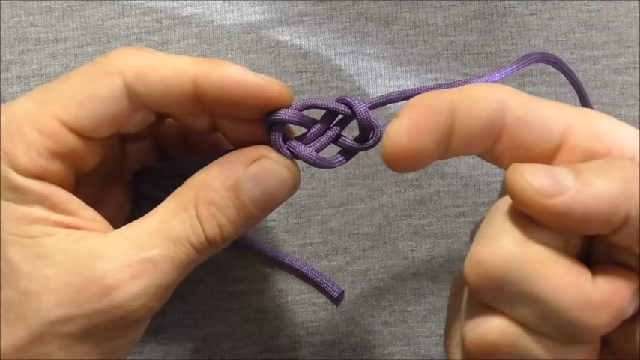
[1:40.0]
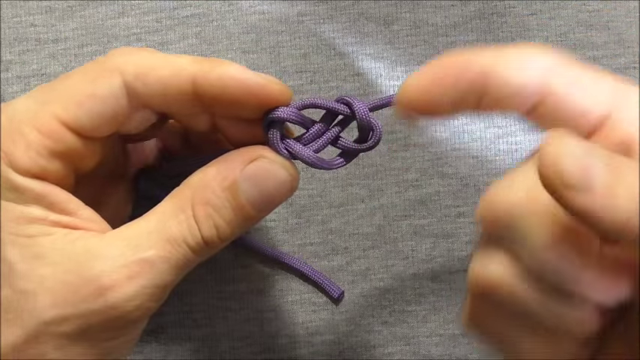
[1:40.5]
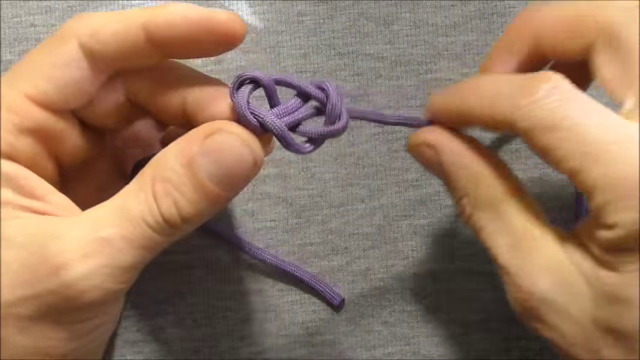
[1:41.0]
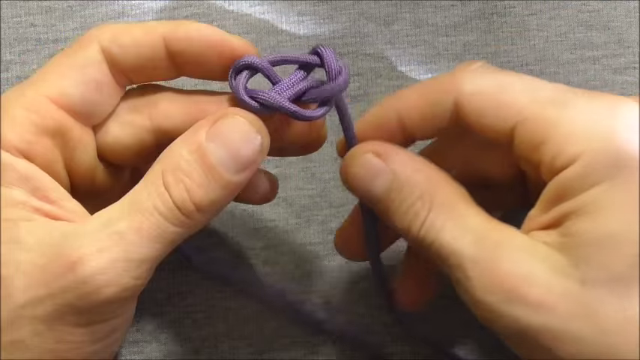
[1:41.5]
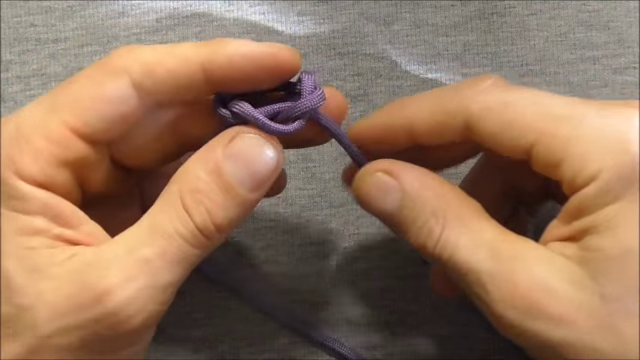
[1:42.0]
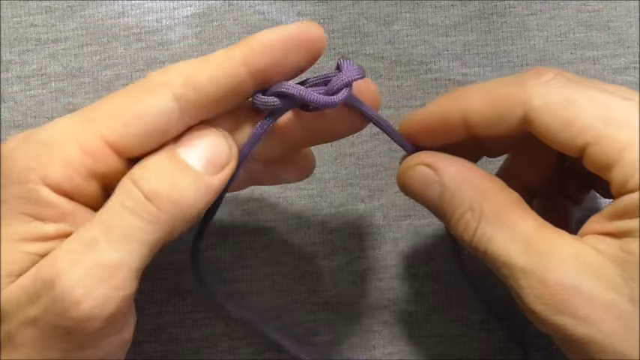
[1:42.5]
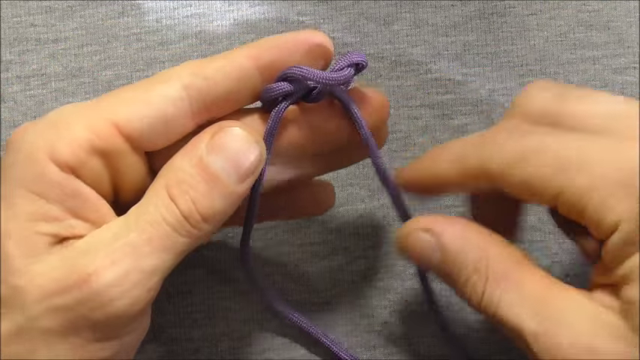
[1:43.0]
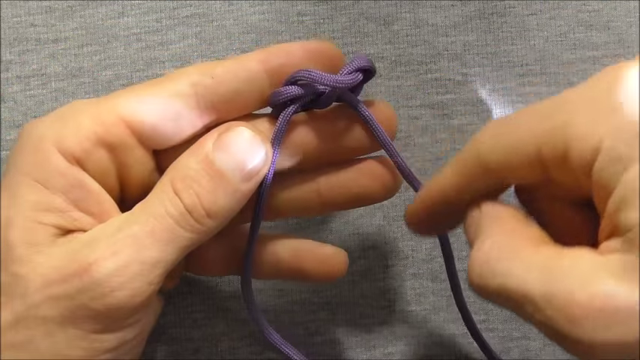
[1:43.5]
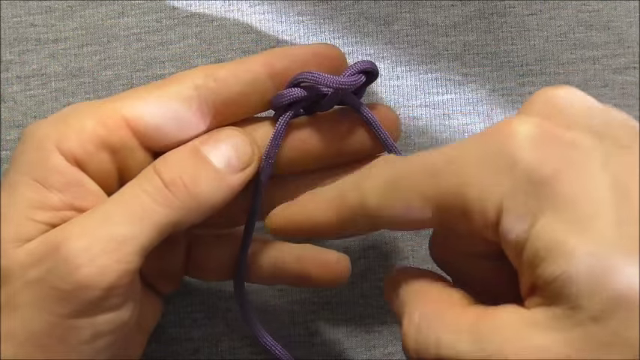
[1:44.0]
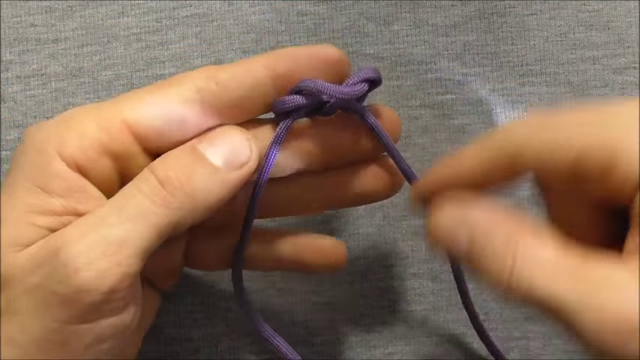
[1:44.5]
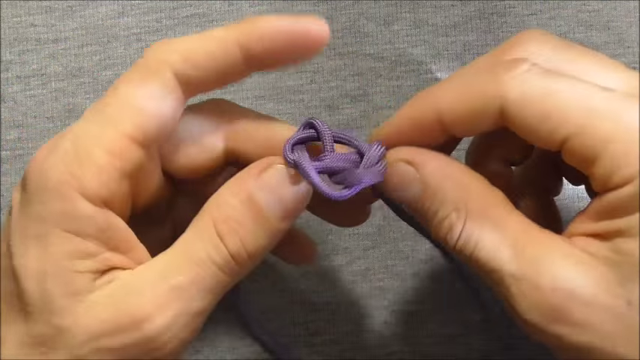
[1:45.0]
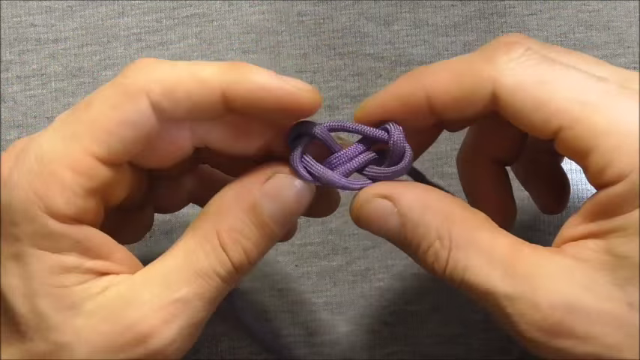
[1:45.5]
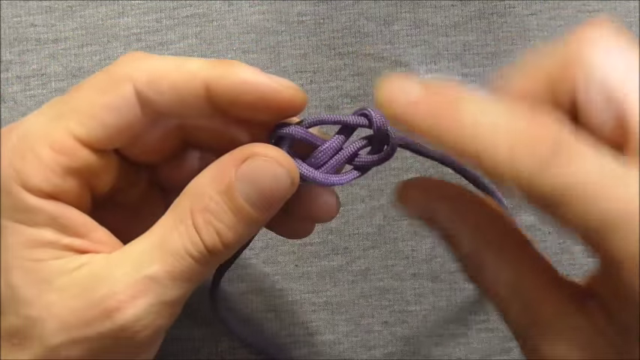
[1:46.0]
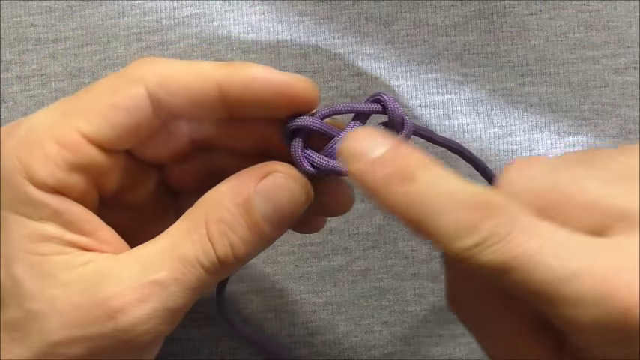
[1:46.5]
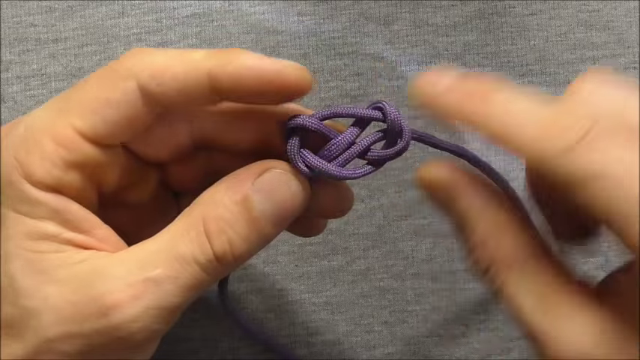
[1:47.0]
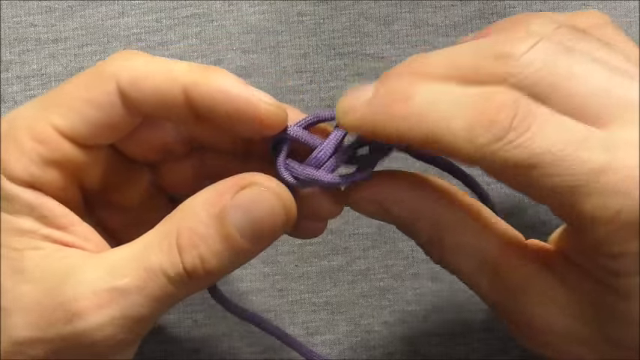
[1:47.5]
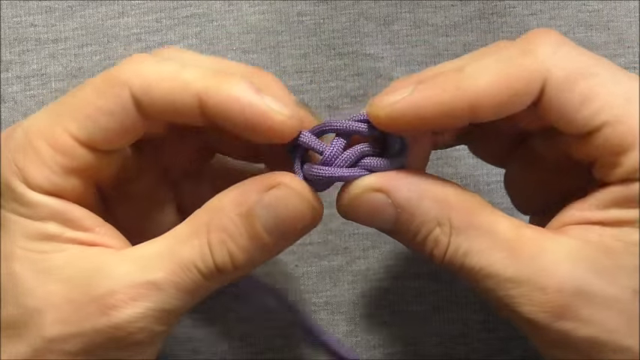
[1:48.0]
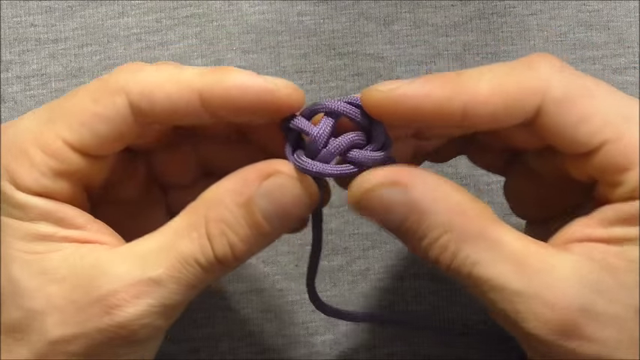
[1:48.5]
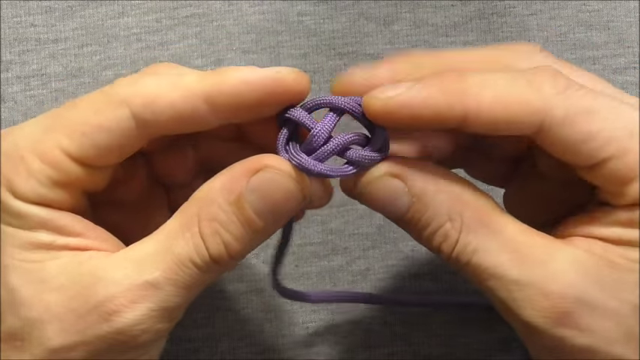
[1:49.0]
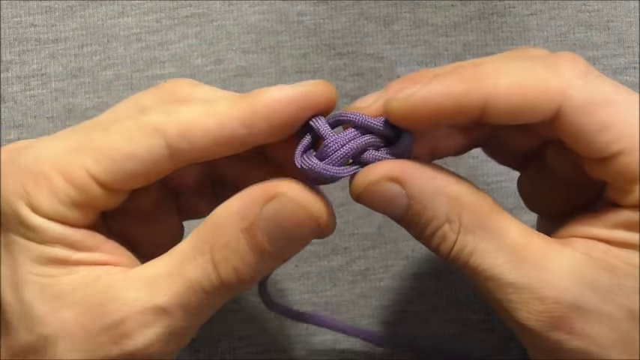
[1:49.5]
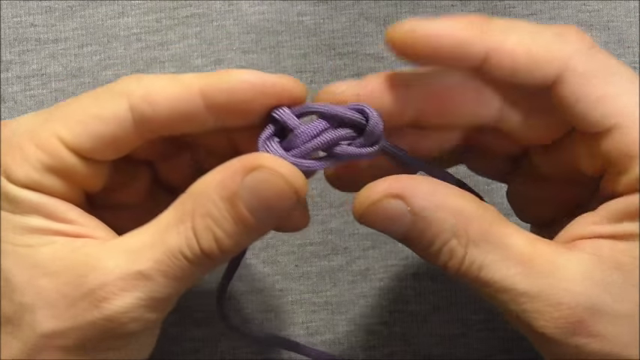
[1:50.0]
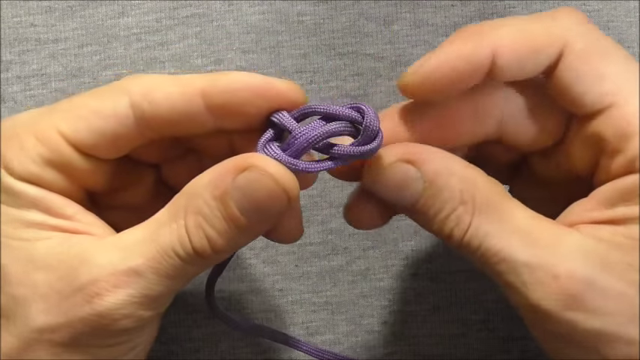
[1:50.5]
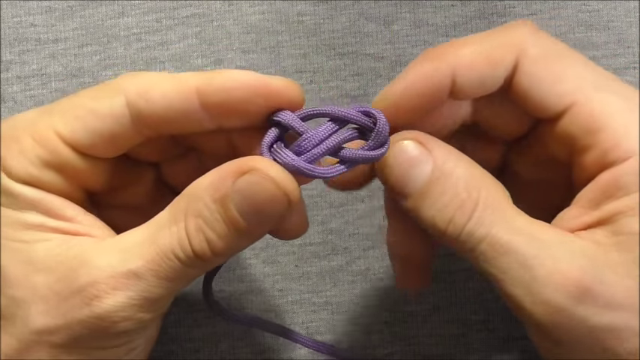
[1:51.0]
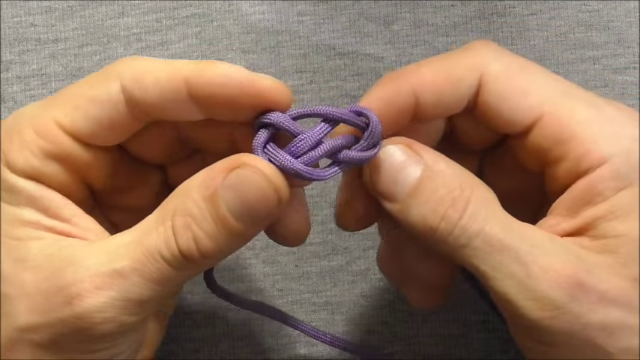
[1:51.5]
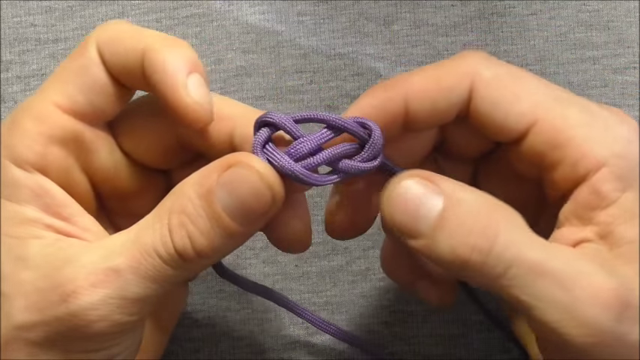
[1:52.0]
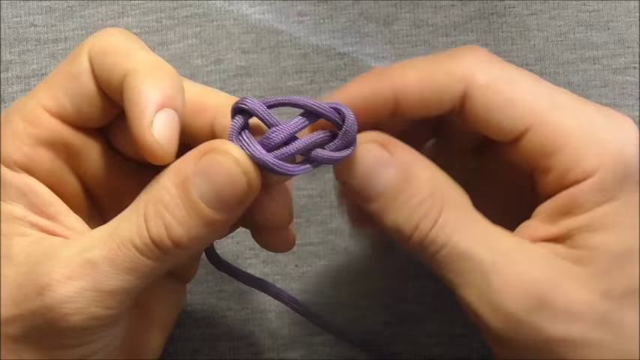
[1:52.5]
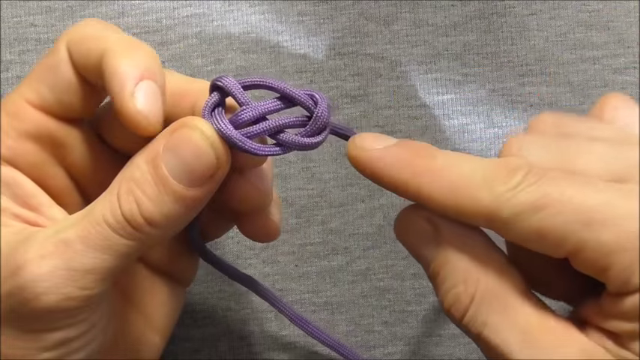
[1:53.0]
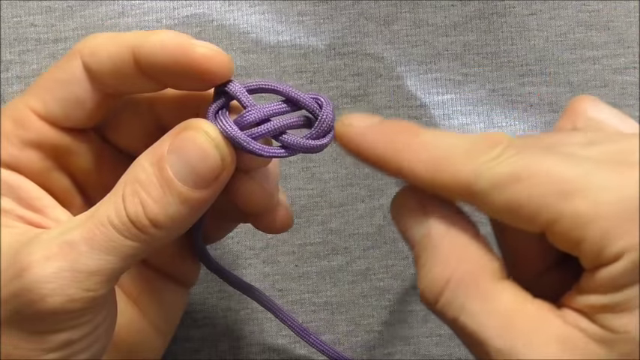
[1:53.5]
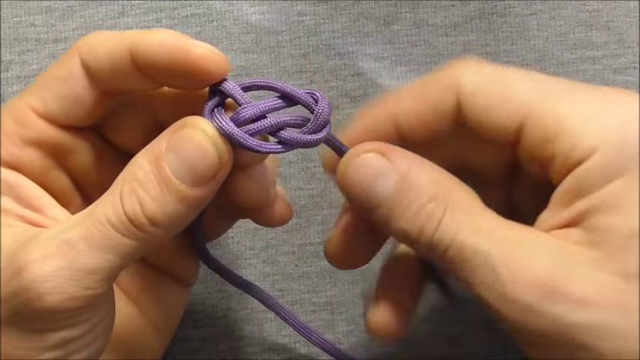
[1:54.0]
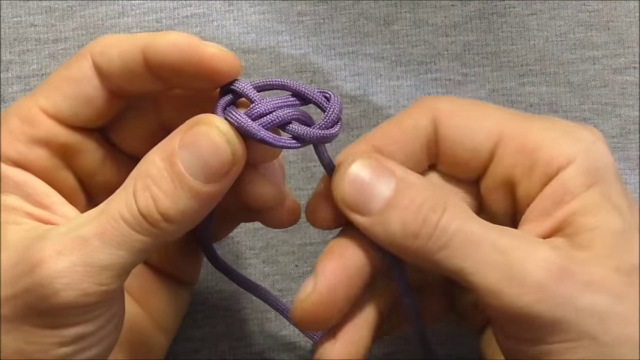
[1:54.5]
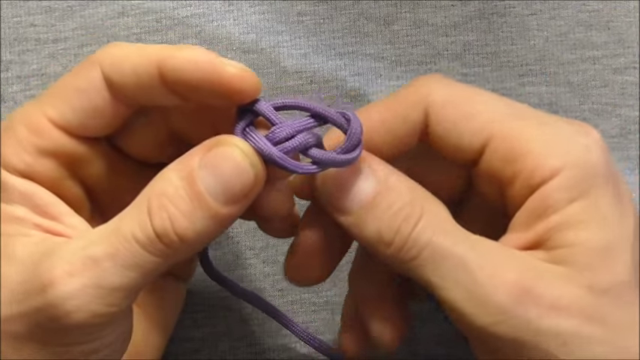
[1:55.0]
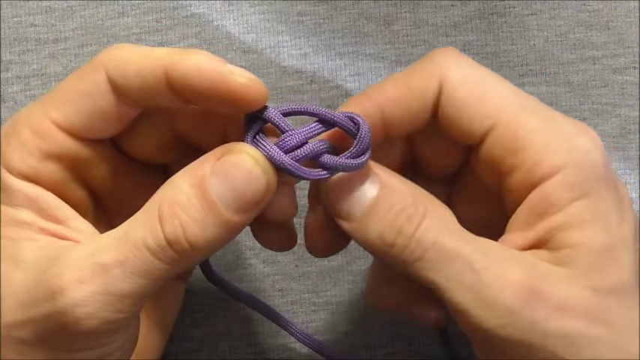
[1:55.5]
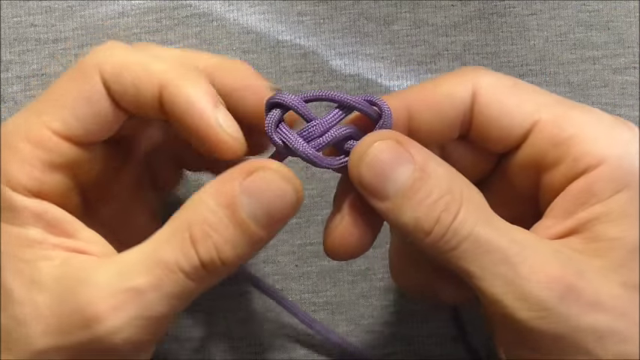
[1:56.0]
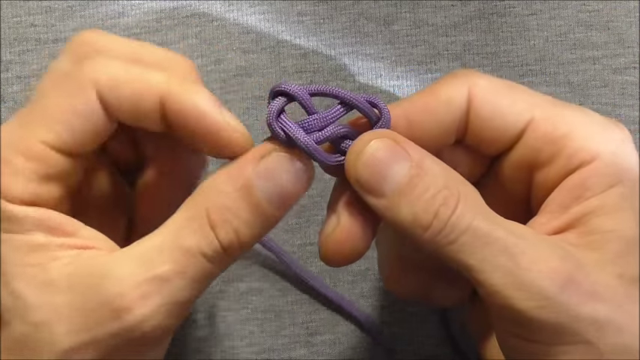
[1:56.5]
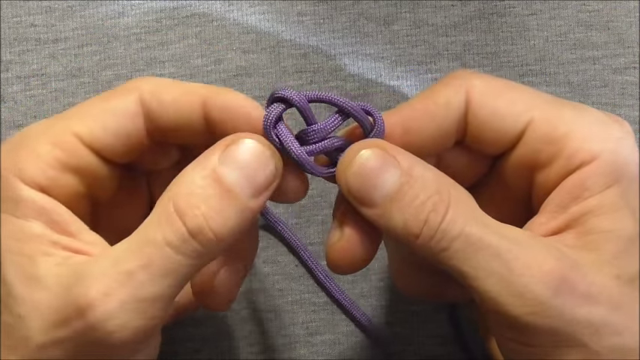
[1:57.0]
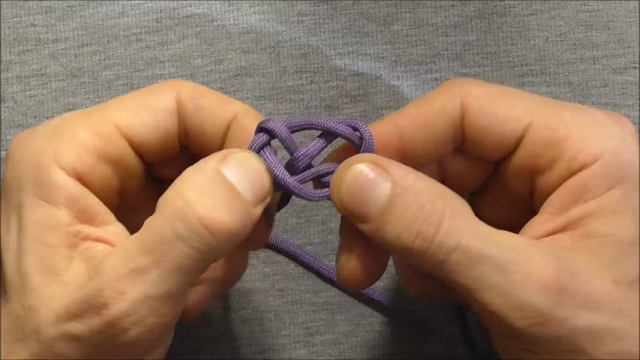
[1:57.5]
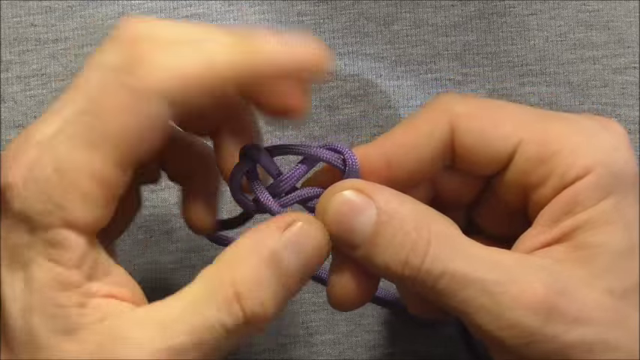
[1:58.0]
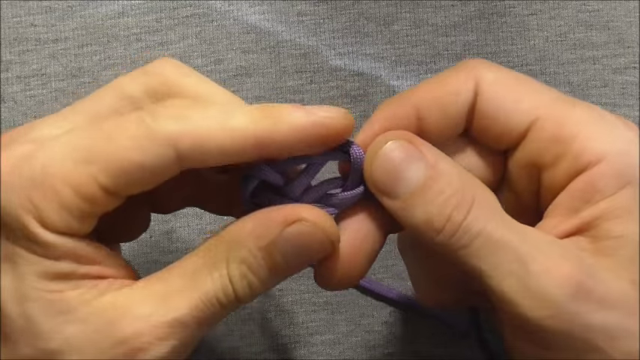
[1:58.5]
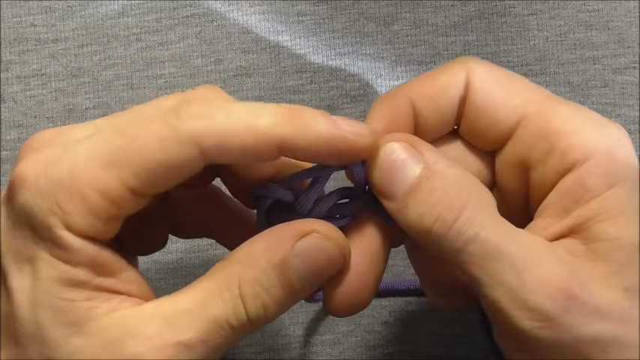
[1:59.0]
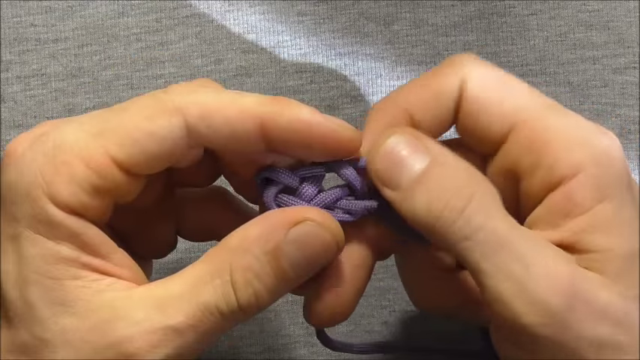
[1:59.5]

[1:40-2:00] A very complicated-looking loop is shown; it looks like a double knot of some sort, almost like a spider web in shape. Two trailing ends of the loop extend on the left and right sides. The loop is made from a deep purple strip of fabric that looks like a shoelace. The left hand holds onto the loop on the left side while the right hand points at different parts of the loop, as if the person is showing what to do next. The person is not seen, only their hands. In a very close-up view of the hands and the loop, the person continues to point to different parts of the loop with the right index finger.